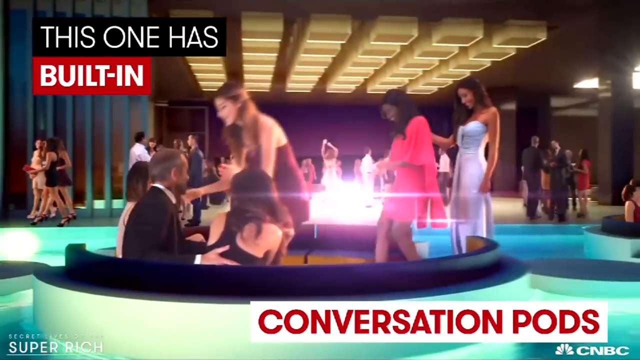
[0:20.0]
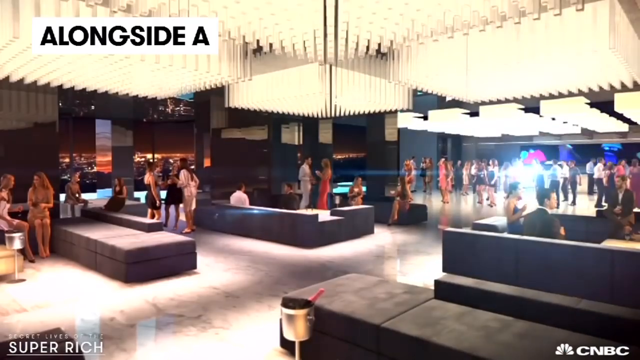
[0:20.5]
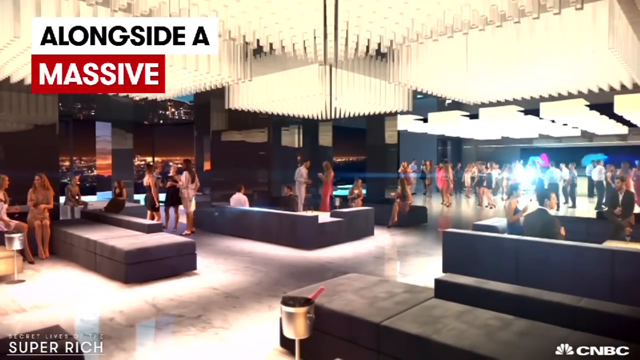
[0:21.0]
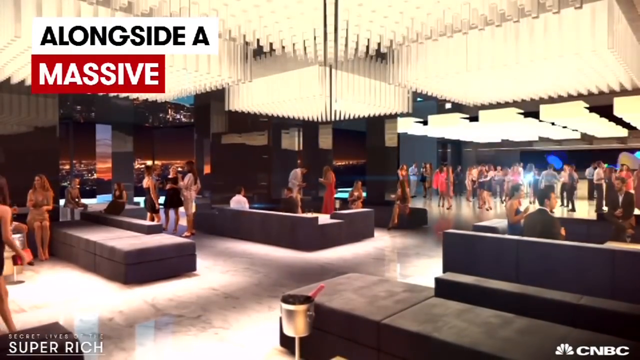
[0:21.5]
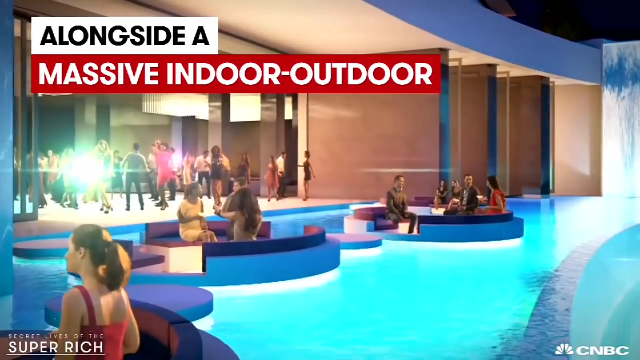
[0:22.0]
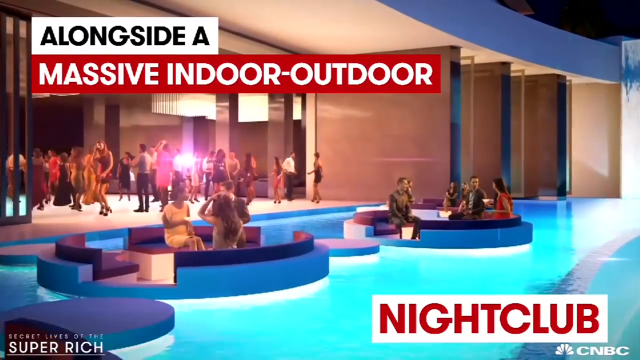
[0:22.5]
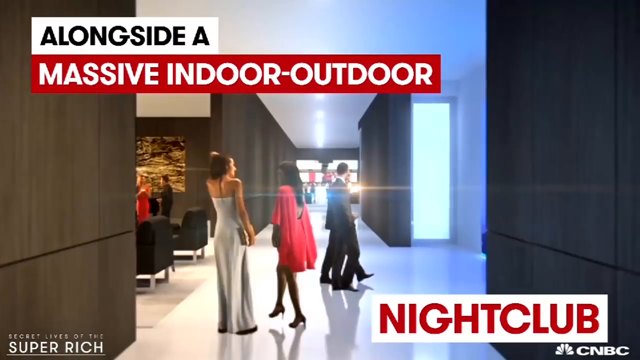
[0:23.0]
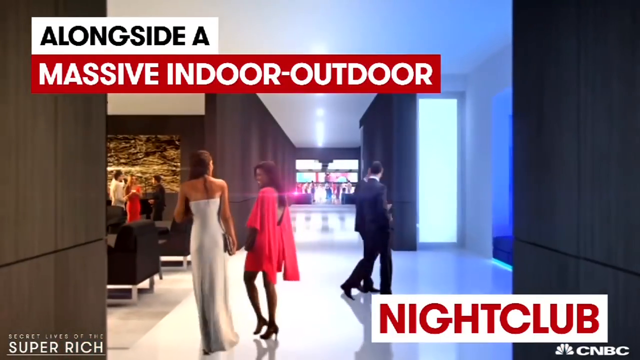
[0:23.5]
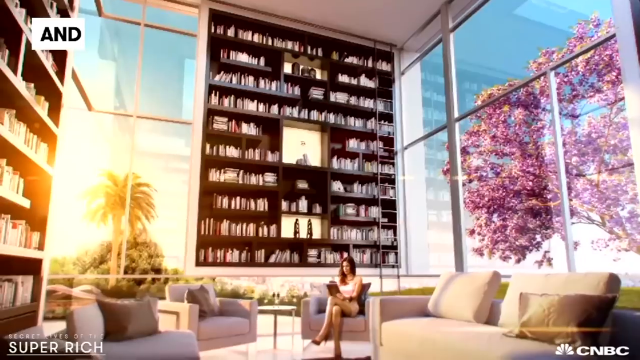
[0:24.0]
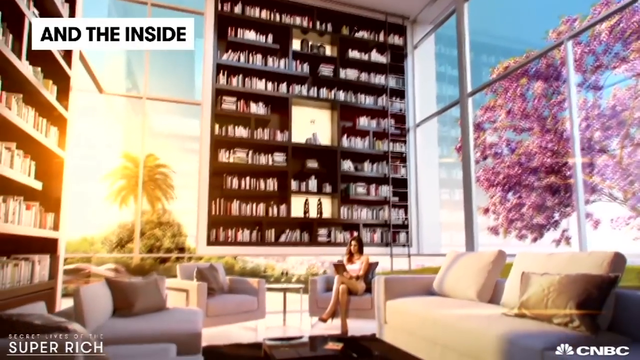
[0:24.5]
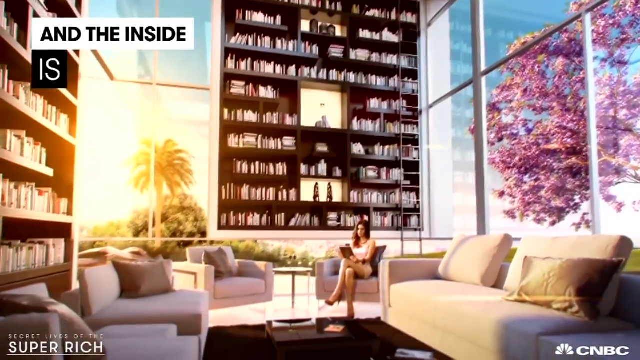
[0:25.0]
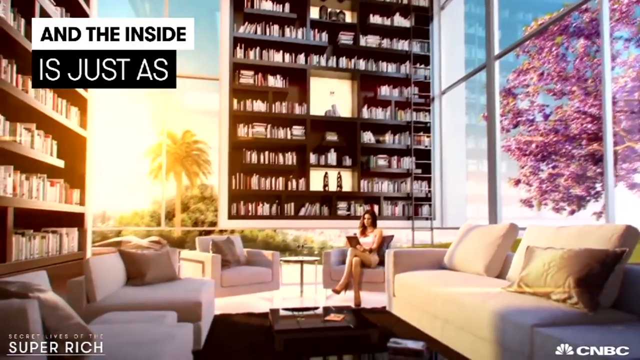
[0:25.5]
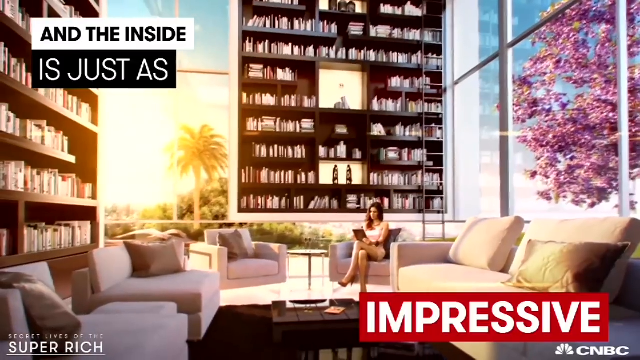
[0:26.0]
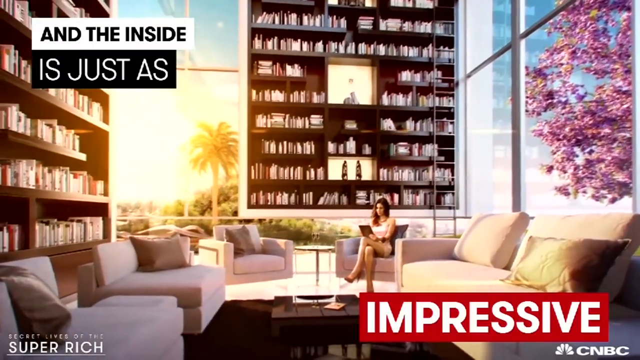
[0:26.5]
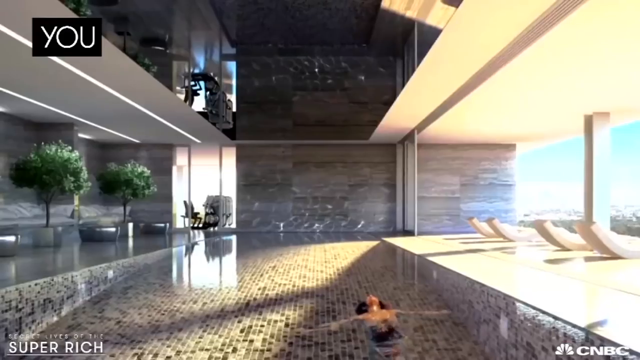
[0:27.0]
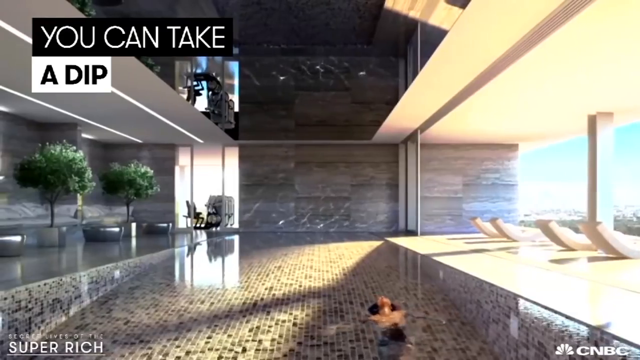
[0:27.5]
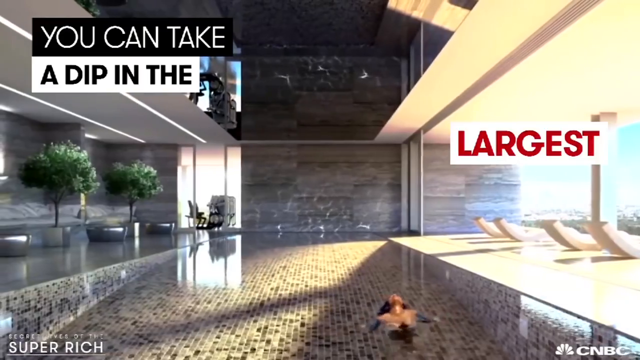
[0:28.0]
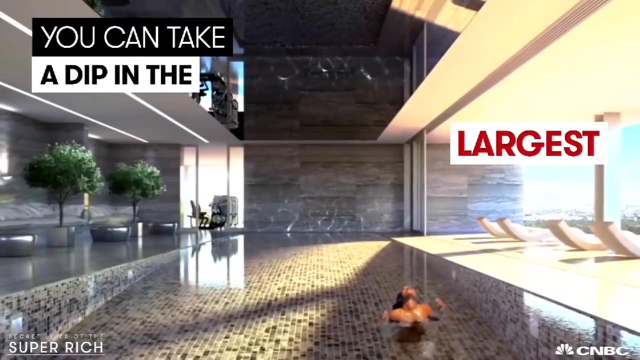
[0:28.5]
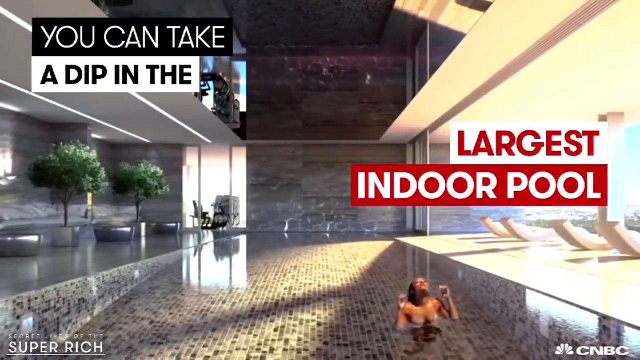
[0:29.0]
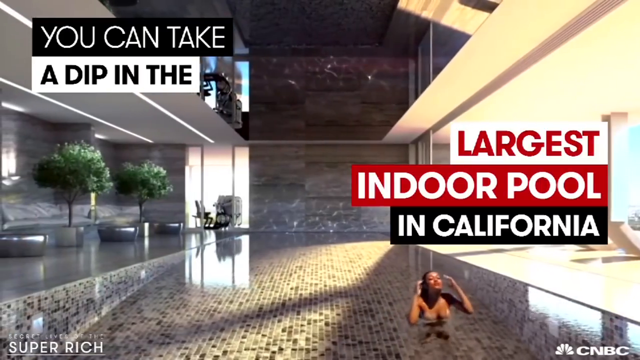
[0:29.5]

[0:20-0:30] Various parts of the inside of the home are shown: living areas, a library, sitting areas, a large indoor swimming pool, and conversation areas. It looks more like a hotel lobby than a home. Many people are in the home and all seem to be enjoying a nice party. One person is swimming in the pool. There are sofas, couches and sitting areas all throughout the home, and inside the swimming pool there also appear to be sitting areas, with people everywhere. There are trees inside the home as well.